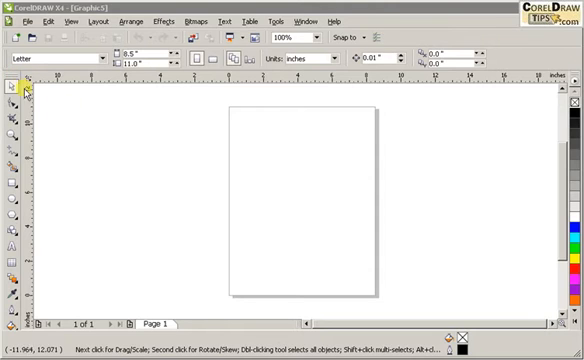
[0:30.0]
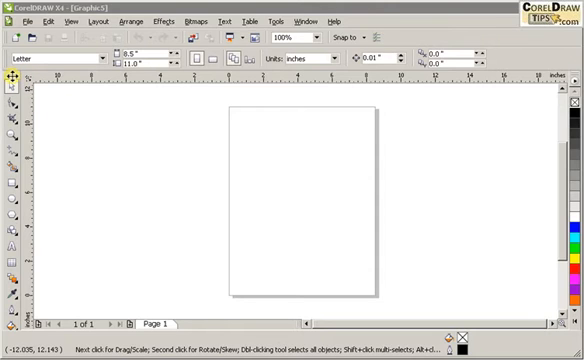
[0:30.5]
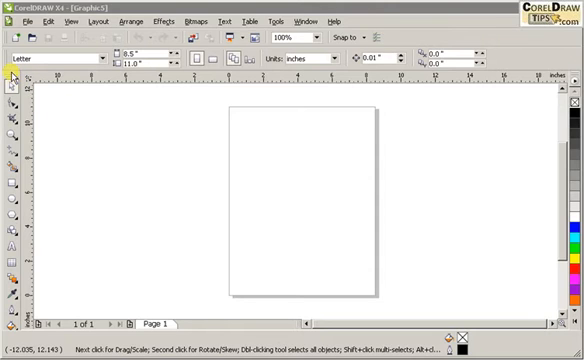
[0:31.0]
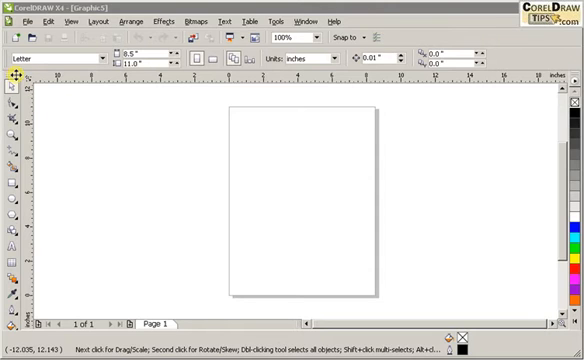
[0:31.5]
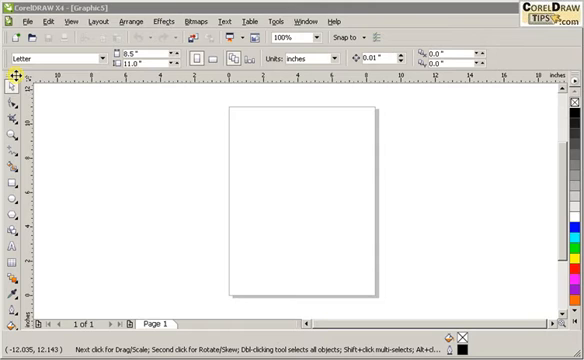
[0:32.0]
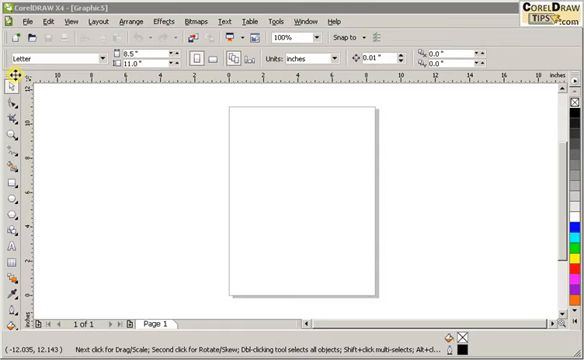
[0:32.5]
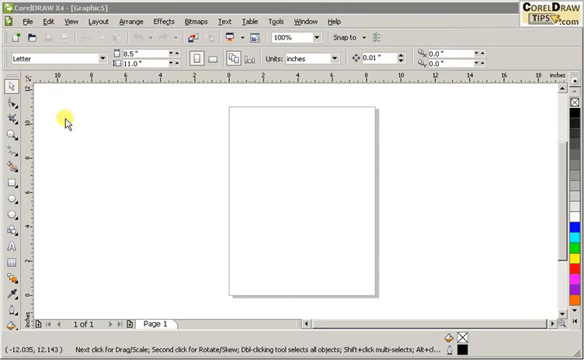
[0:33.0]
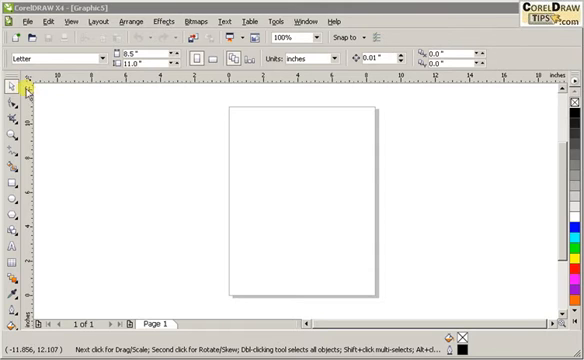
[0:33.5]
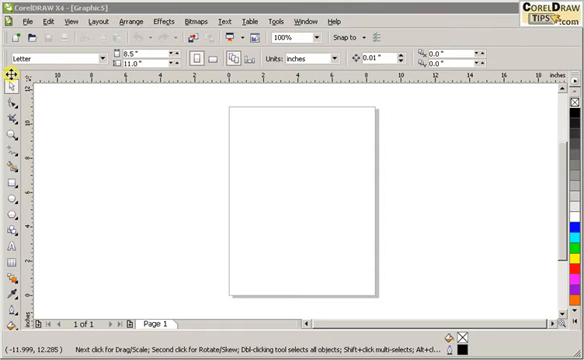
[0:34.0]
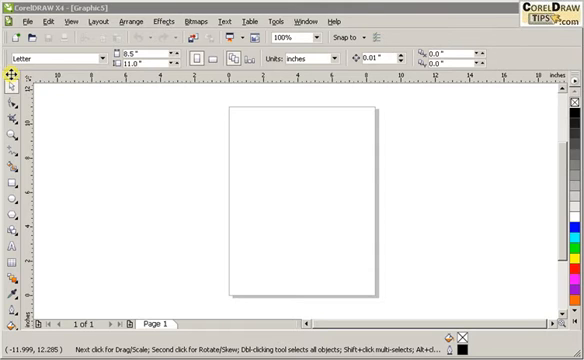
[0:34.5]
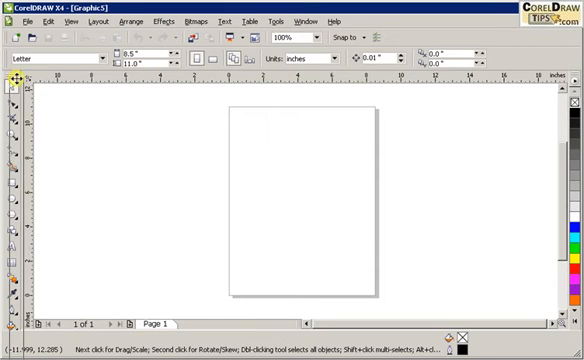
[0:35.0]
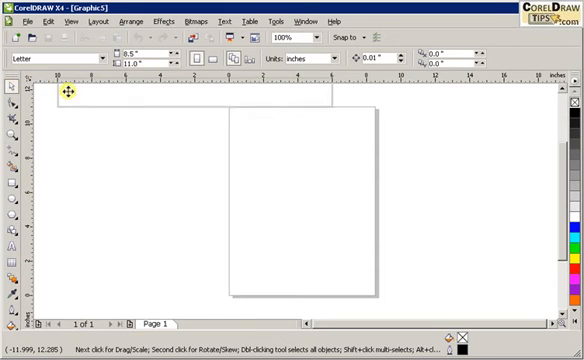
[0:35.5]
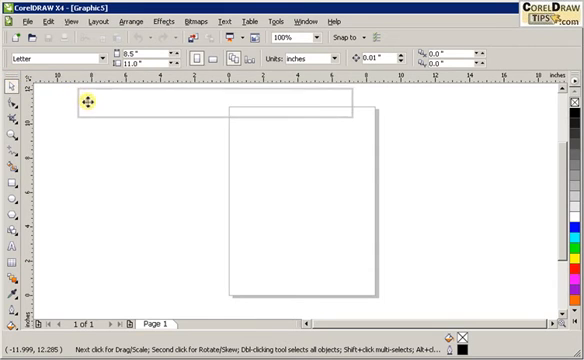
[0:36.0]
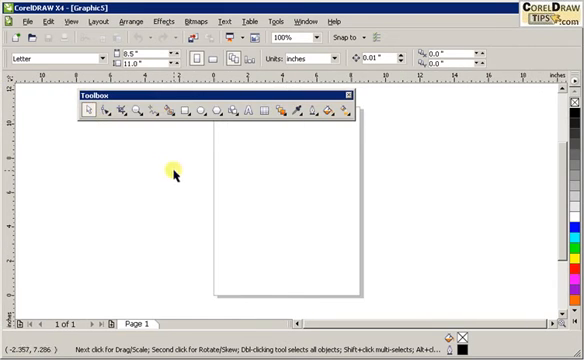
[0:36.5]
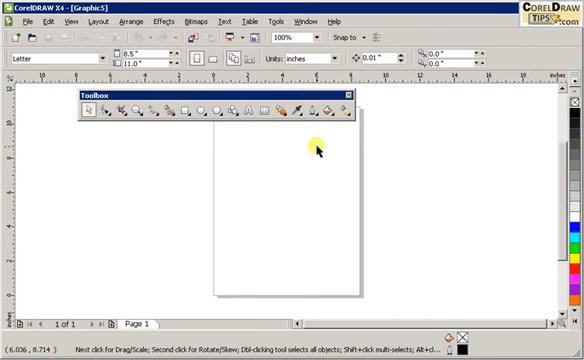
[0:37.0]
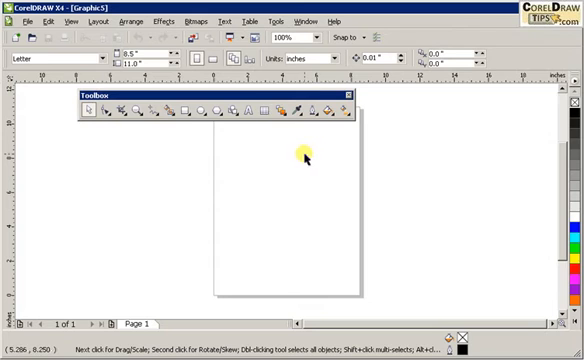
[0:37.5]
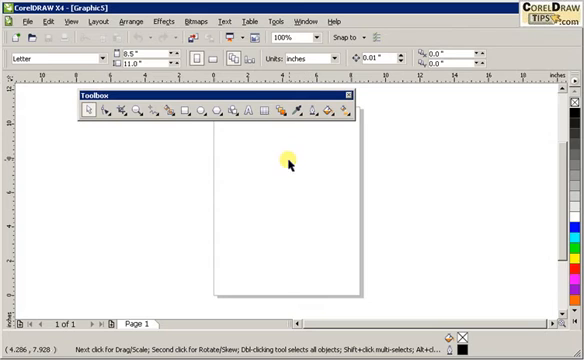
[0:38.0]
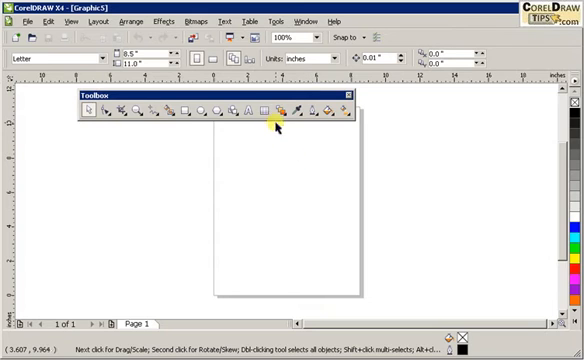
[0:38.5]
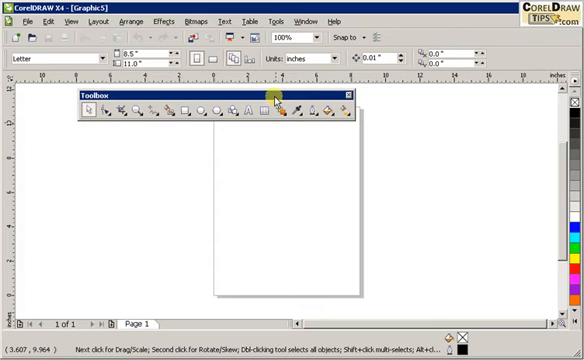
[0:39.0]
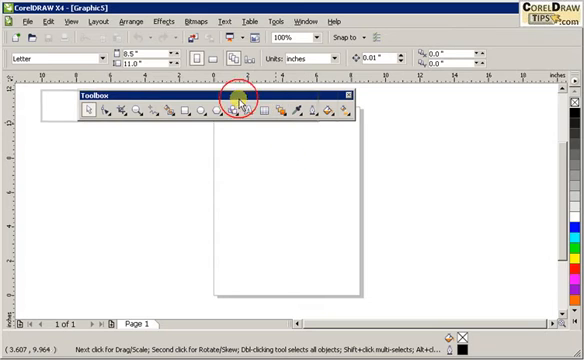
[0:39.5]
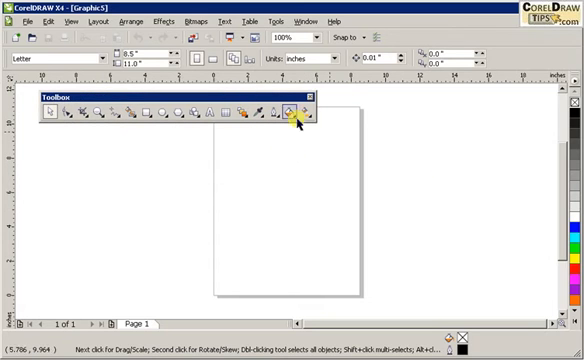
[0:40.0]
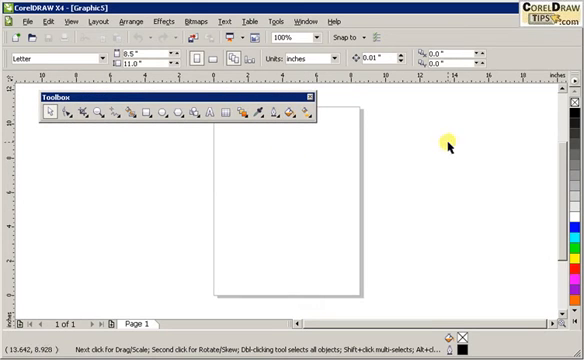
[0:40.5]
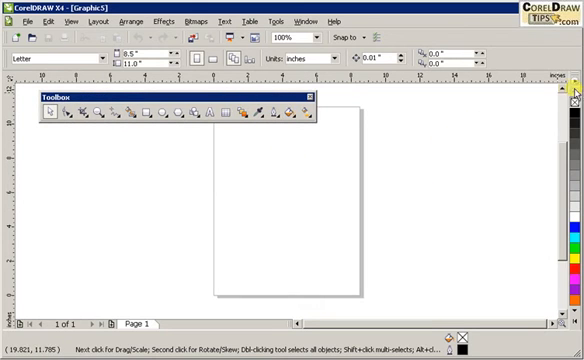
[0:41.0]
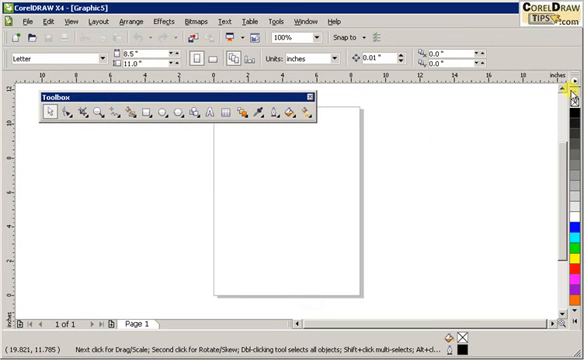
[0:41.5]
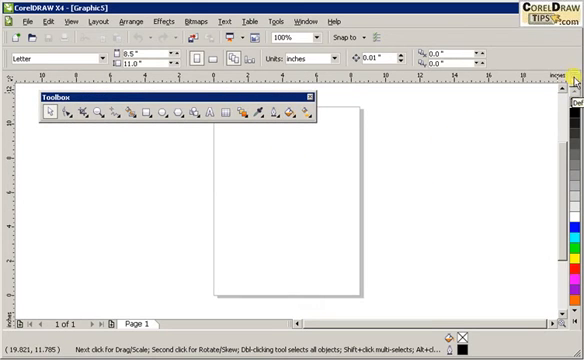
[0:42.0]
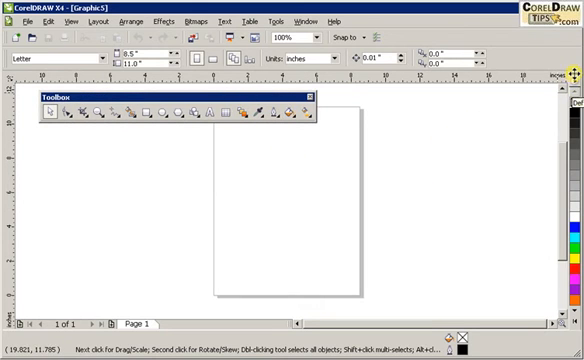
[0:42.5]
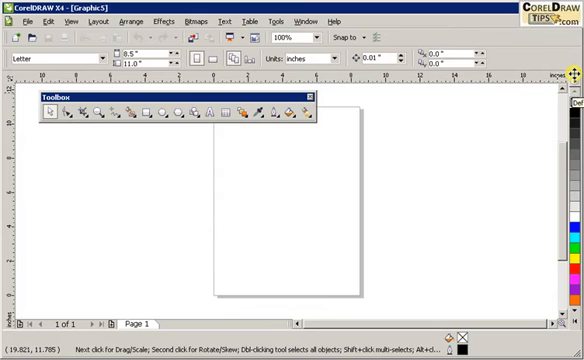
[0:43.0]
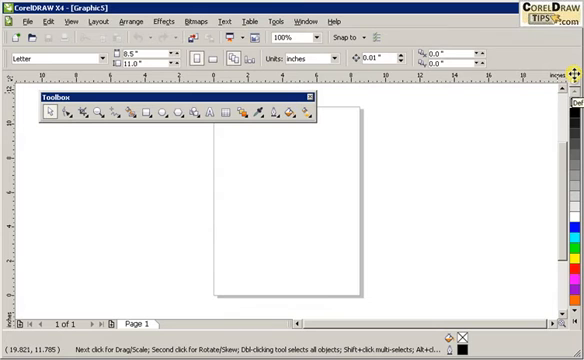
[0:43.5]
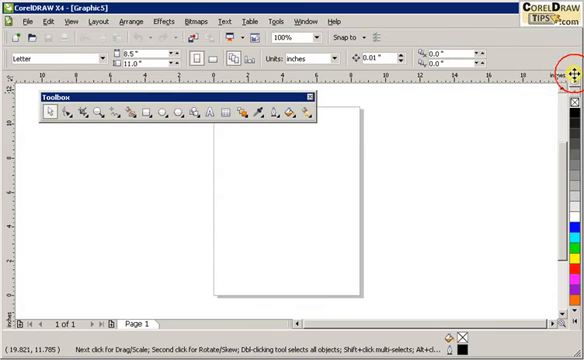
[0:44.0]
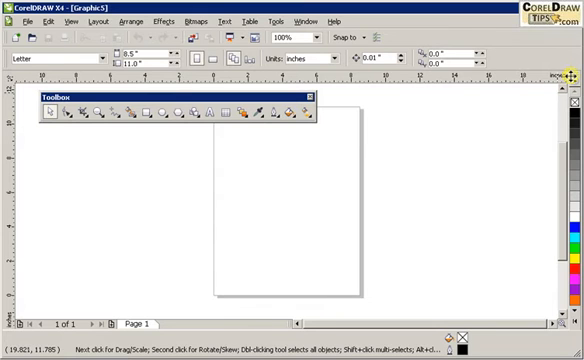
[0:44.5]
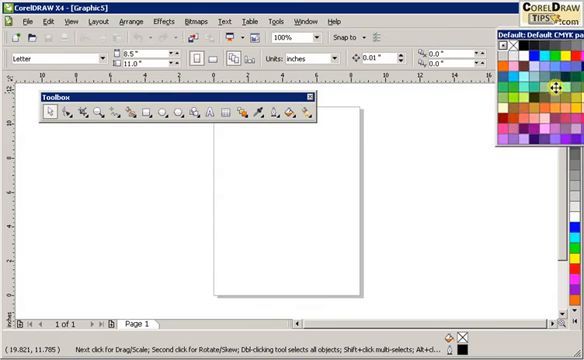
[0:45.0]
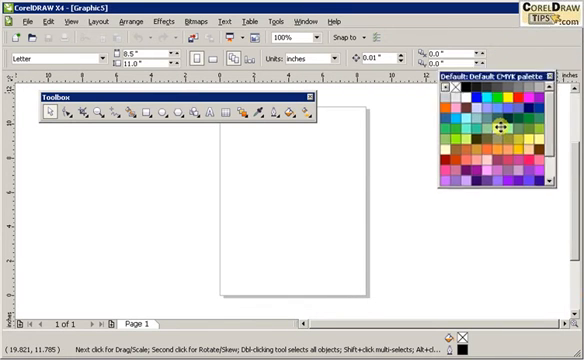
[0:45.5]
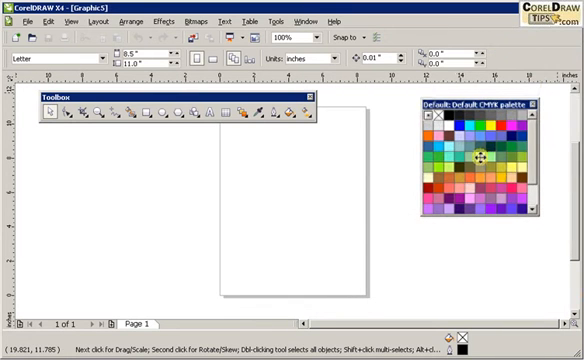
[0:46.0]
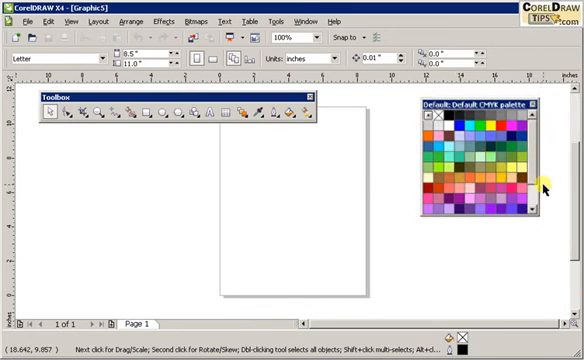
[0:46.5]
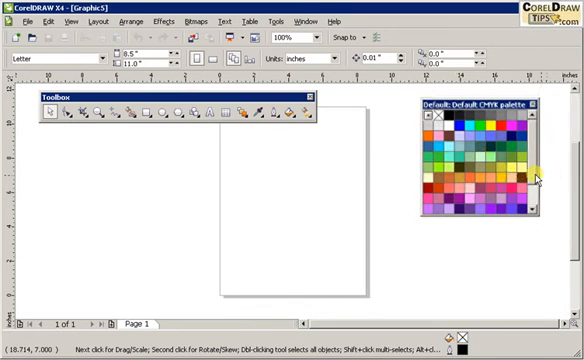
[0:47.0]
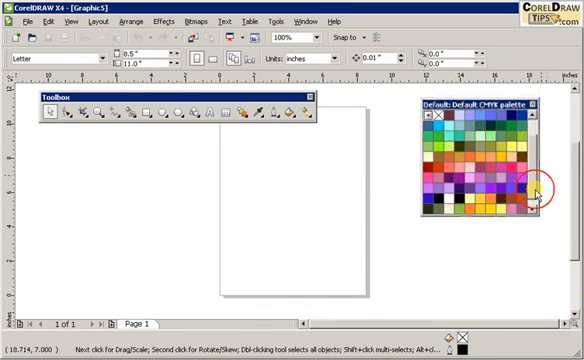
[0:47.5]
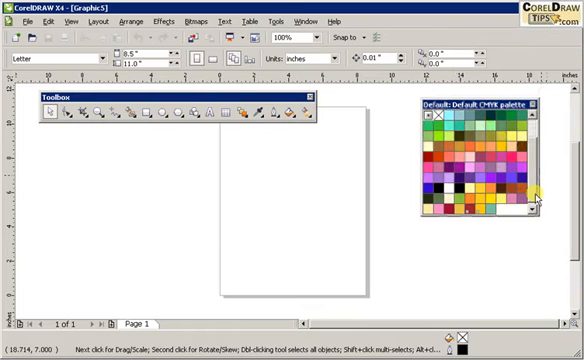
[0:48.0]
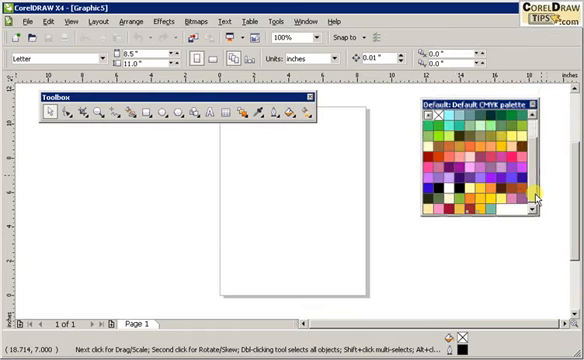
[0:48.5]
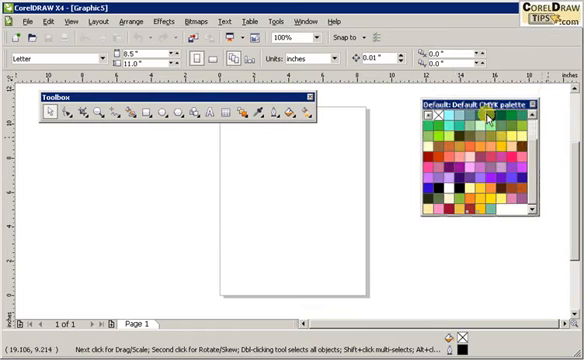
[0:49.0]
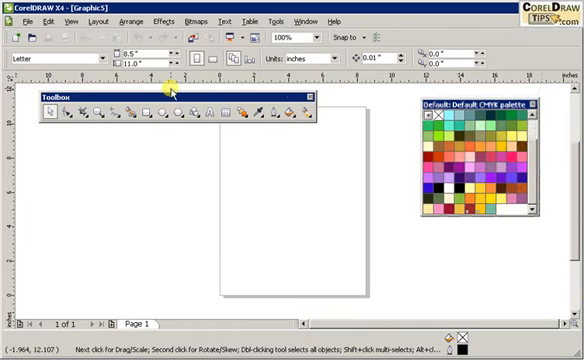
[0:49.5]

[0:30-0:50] The cursor selects another toolbar running down the left vertical side and clicks on its top, and the cursor becomes a four-pronged arrow symbol, with an arrow pointing in each direction, outlined in red on a yellow background. It drags the bar to a horizontal area at the top of the white blank page. White text on a dark blue border at its top shows it is a toolbox rather than a toolbar. The cursor, with a yellow circle at its front, moves the toolbox further to the left of the screen. The same action is then performed on the right: the cursor activates the four-direction drag and drops a color bar from the right-hand side of the screen onto the top right of the blank white page. It is headed "Default CMYK palette" and contains a 10 by 10 block of squares in different colors, with a scroll bar at the side. The scroll bar is moved to the bottom, revealing further squares with further colors.